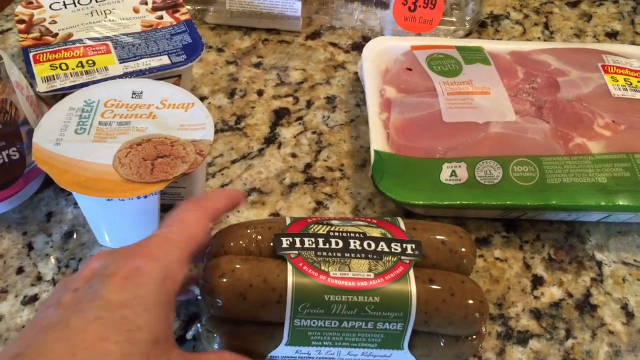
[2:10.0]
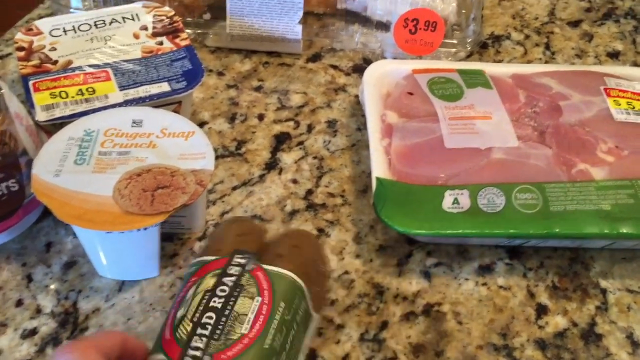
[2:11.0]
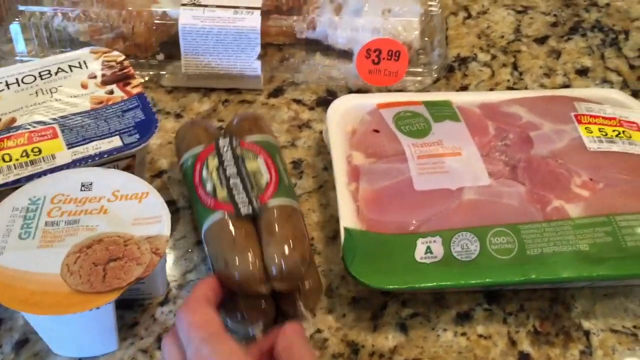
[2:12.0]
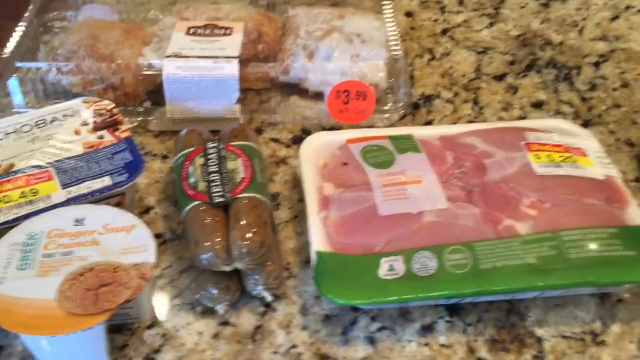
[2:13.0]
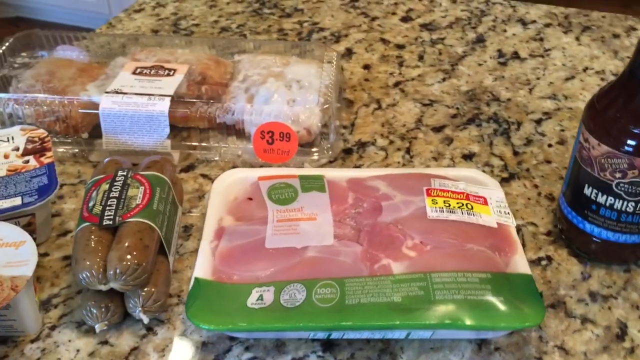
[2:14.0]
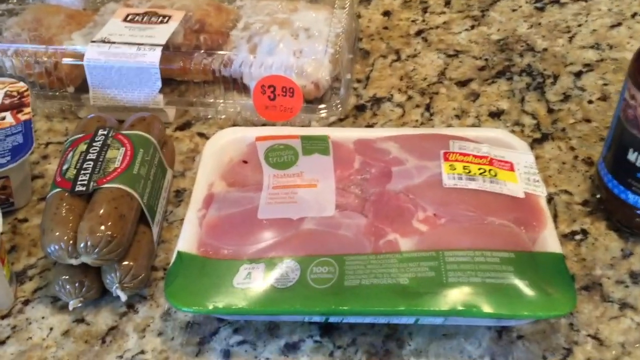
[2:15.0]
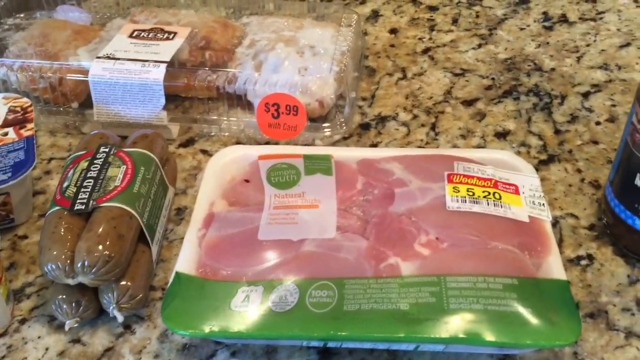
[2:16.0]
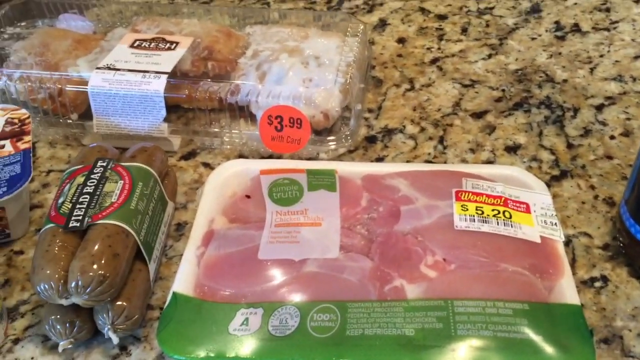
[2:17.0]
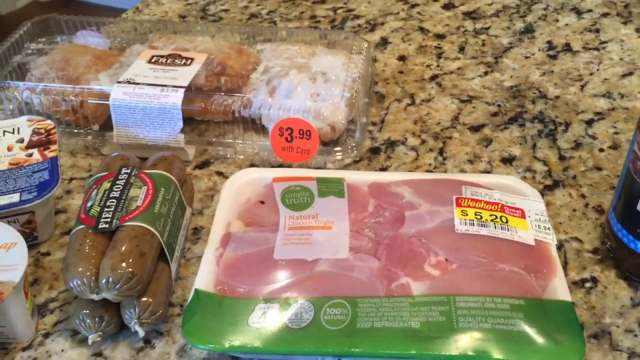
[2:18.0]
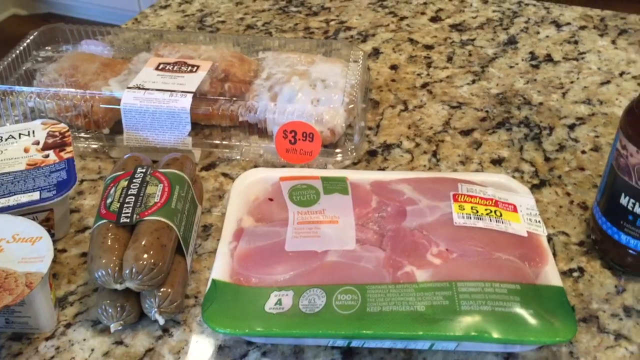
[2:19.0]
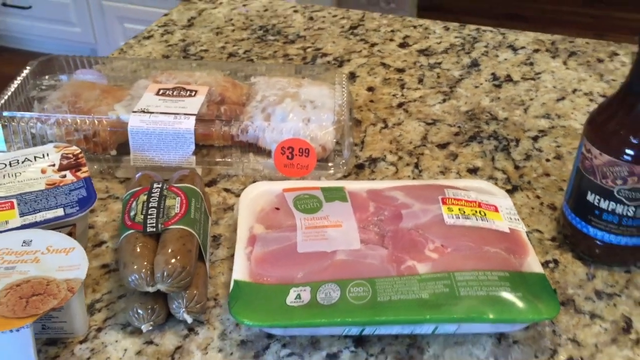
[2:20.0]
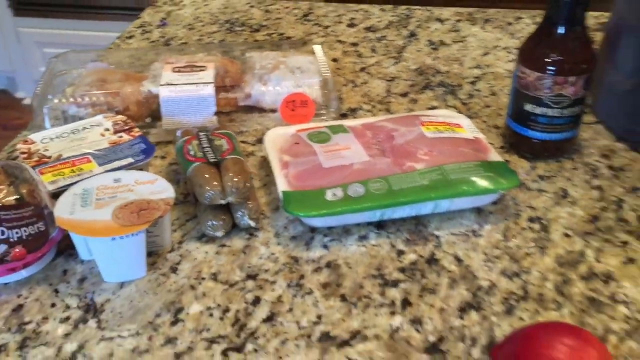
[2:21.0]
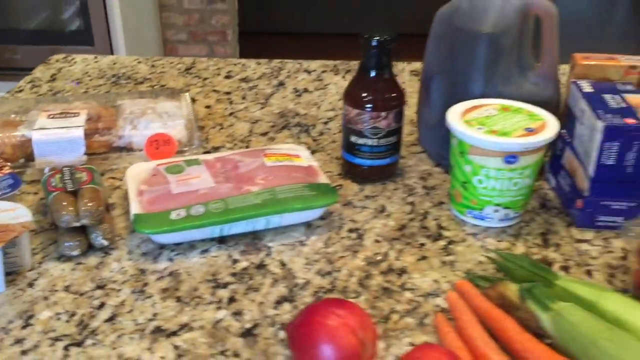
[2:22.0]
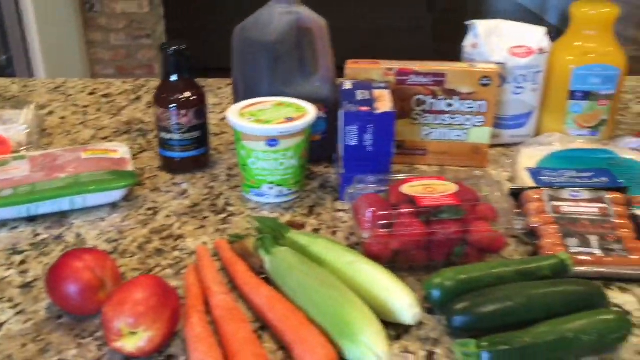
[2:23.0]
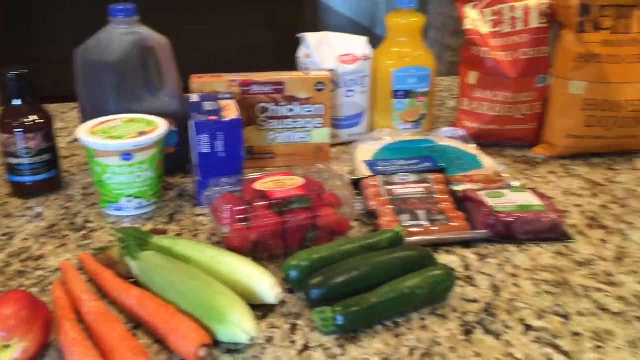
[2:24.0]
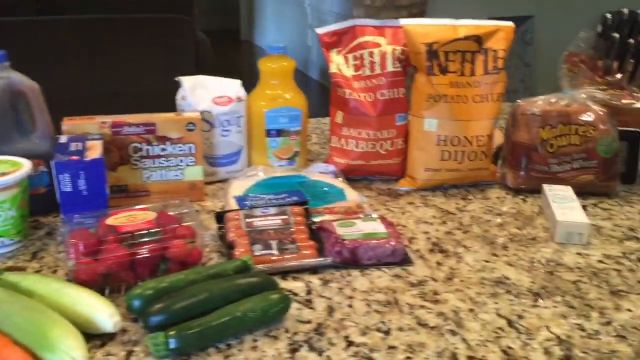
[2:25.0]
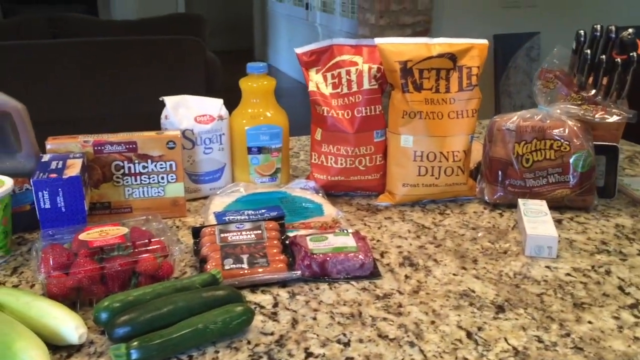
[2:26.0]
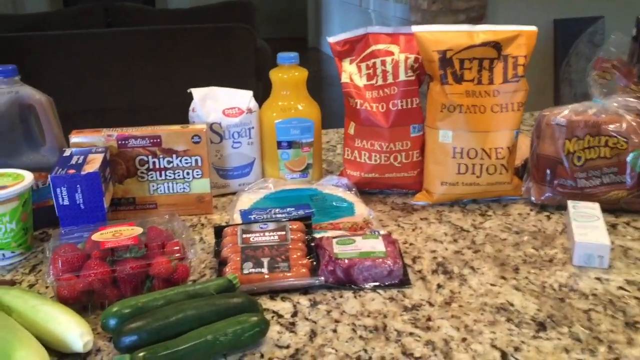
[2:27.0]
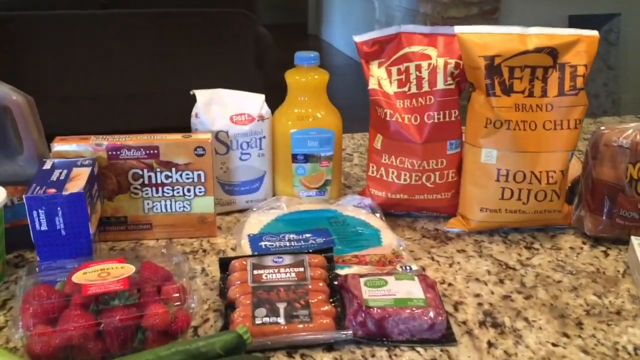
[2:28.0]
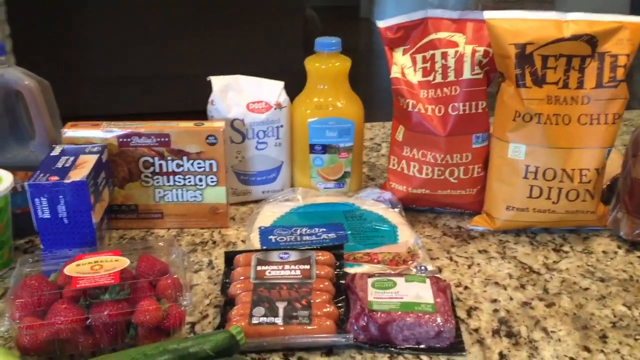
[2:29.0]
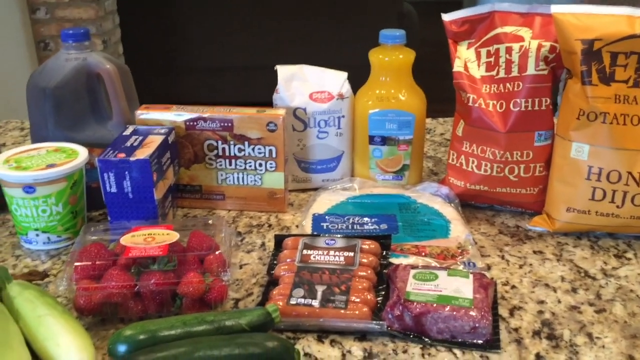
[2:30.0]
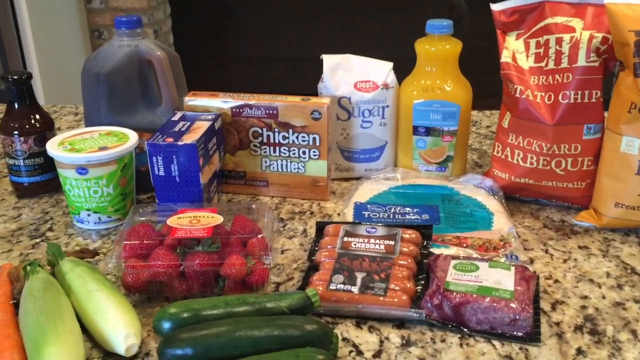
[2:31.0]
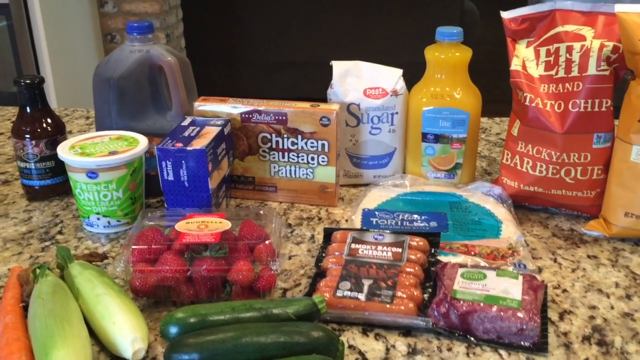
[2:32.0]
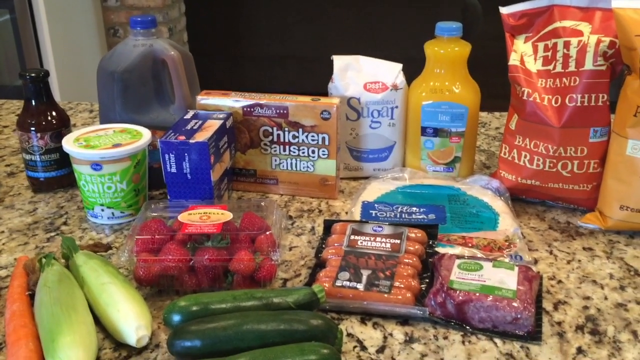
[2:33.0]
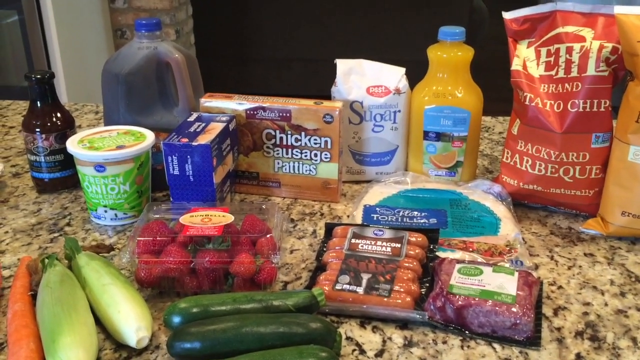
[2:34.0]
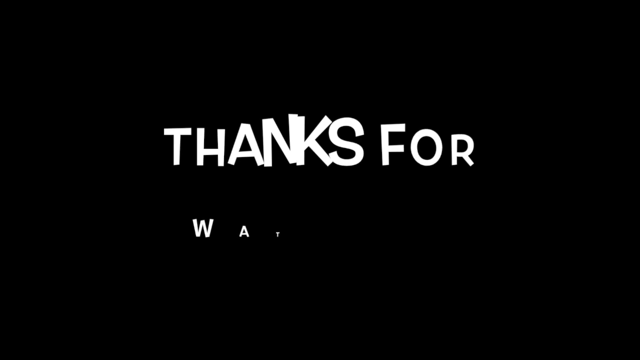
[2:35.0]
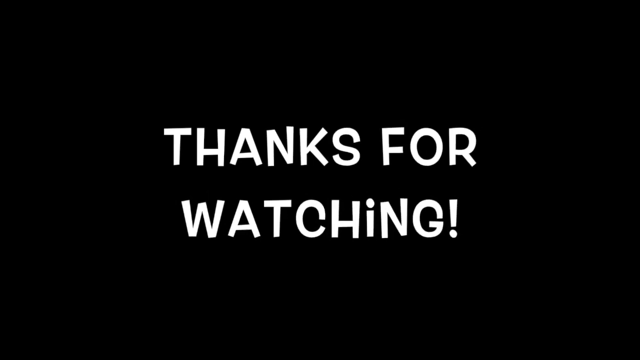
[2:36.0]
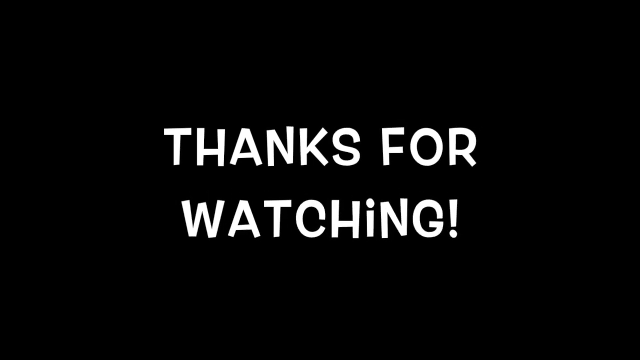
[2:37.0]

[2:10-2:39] The hand touches each item, possibly showing the prices of each product, and there are many things on the table. A croissant is shown. No cooking takes place. Then there is a thank-you to viewers for watching.